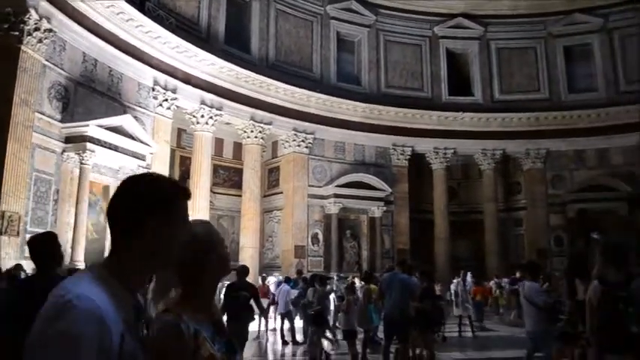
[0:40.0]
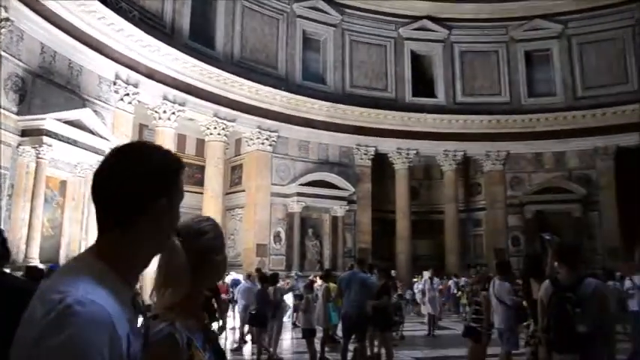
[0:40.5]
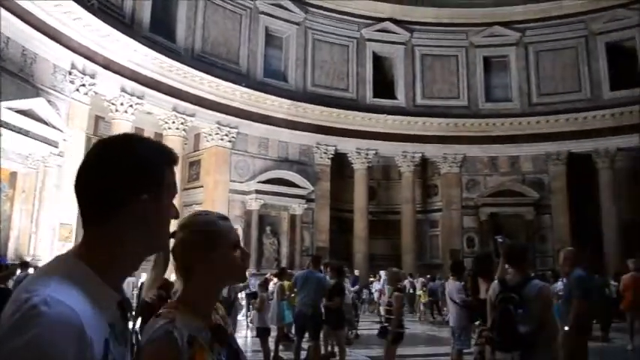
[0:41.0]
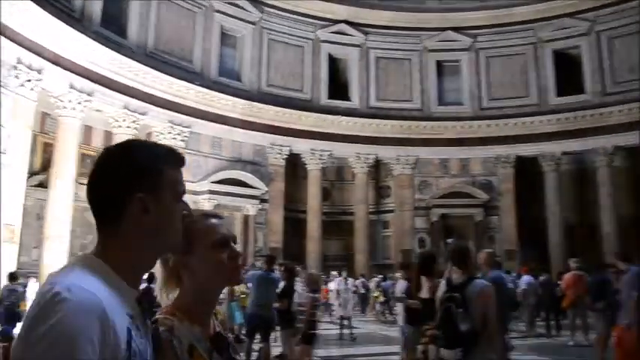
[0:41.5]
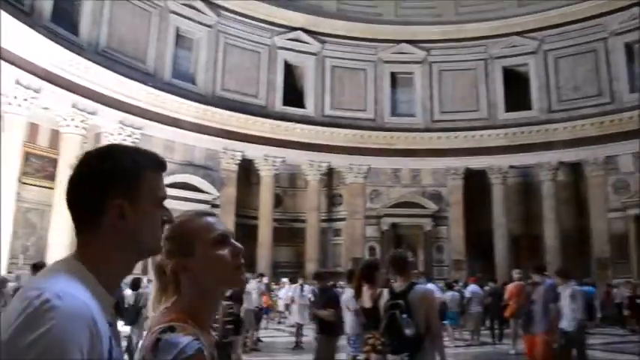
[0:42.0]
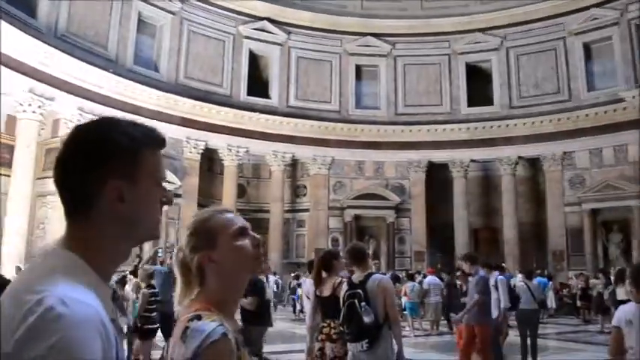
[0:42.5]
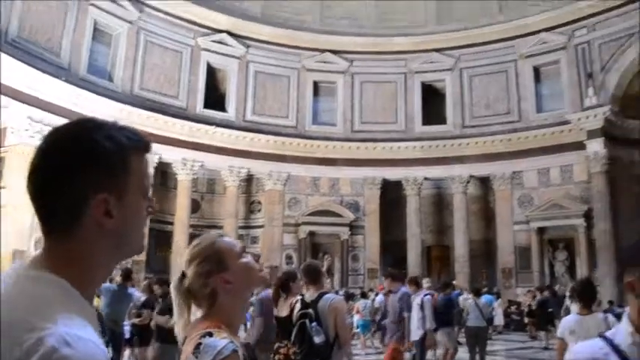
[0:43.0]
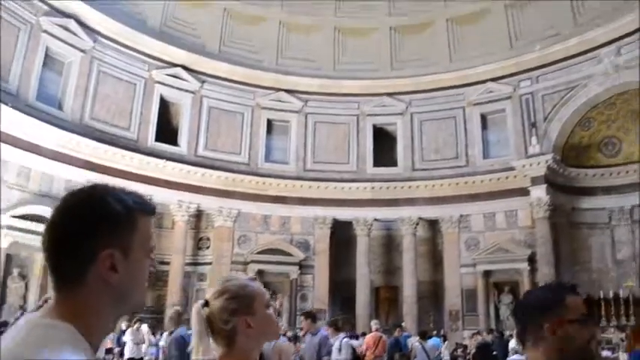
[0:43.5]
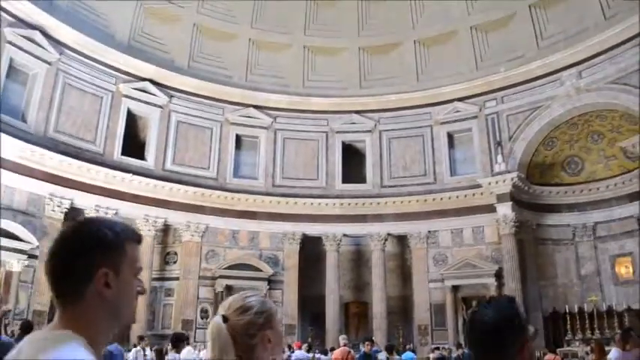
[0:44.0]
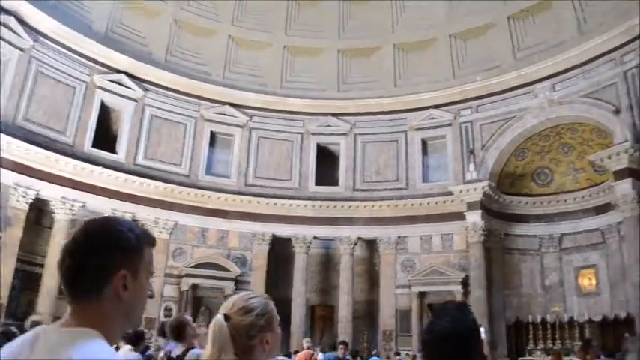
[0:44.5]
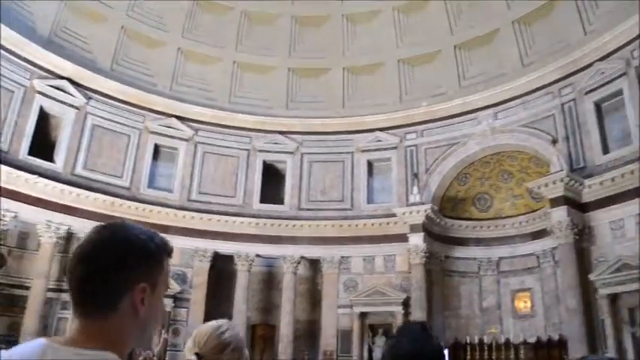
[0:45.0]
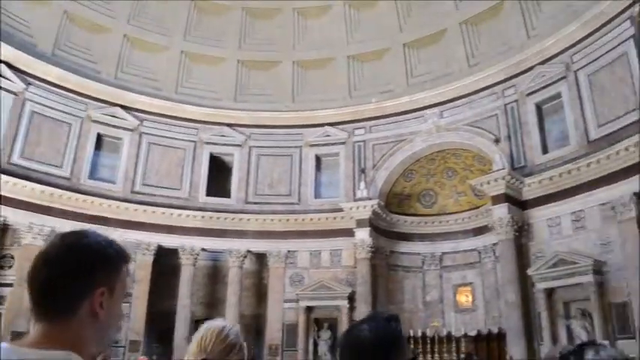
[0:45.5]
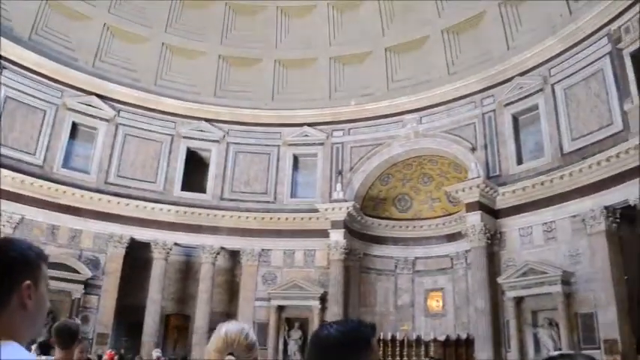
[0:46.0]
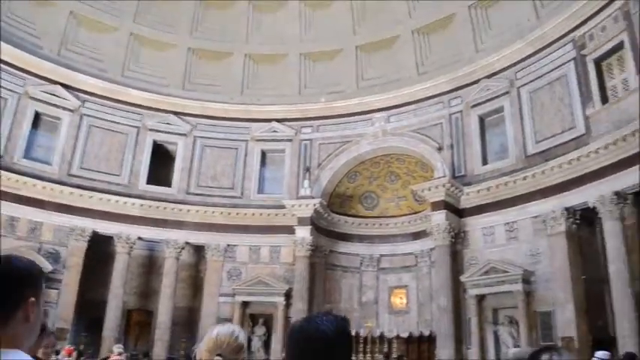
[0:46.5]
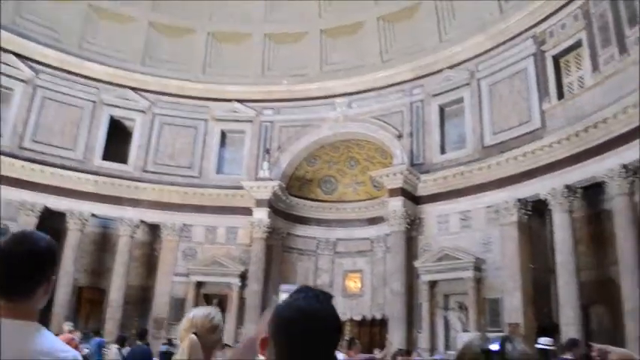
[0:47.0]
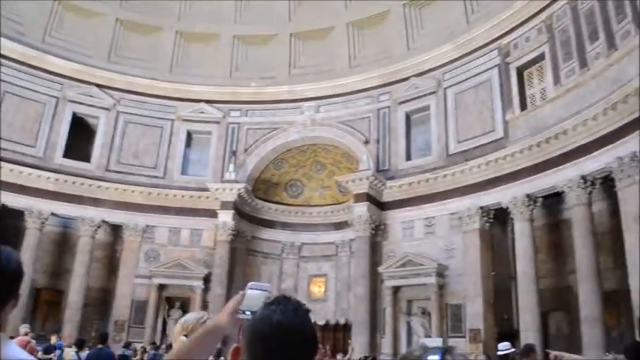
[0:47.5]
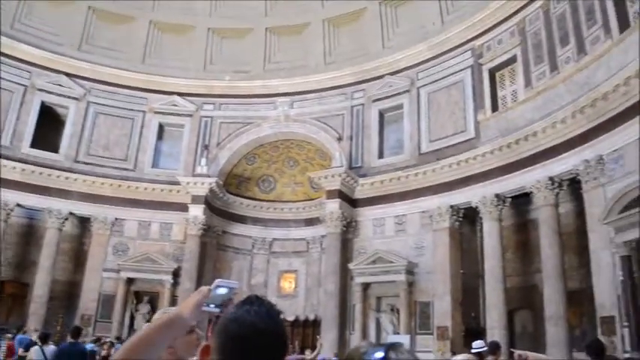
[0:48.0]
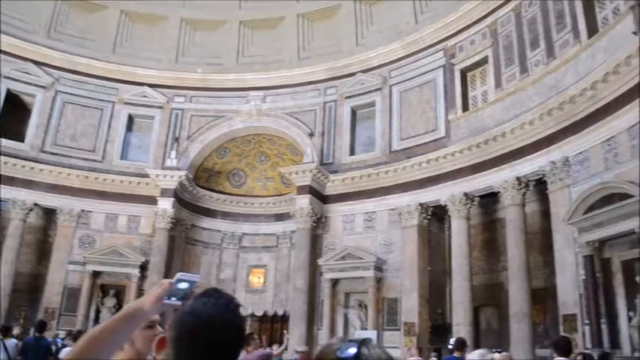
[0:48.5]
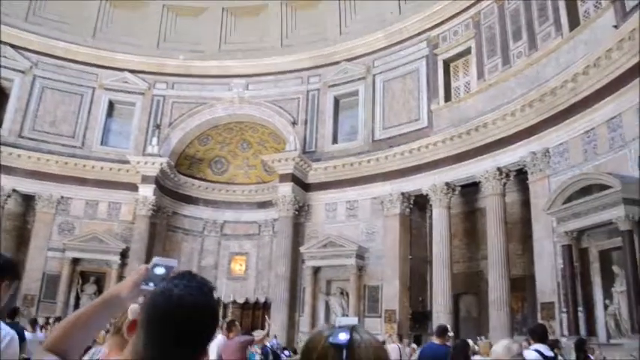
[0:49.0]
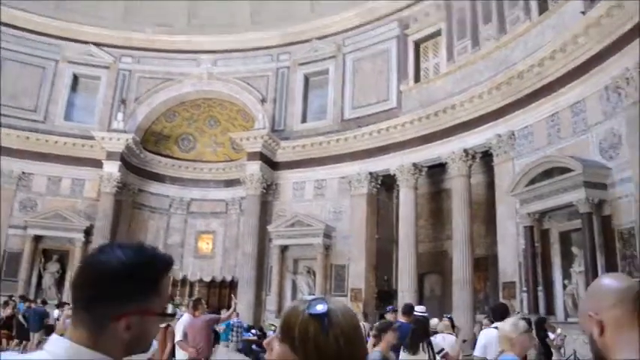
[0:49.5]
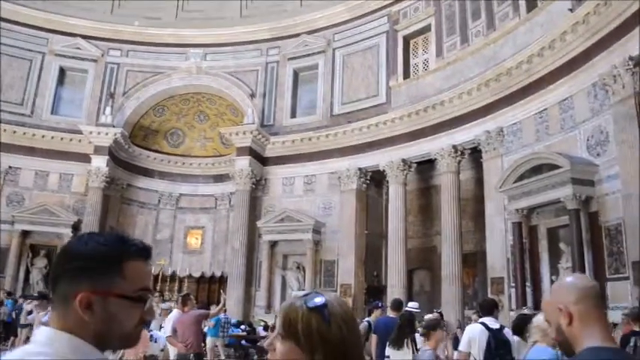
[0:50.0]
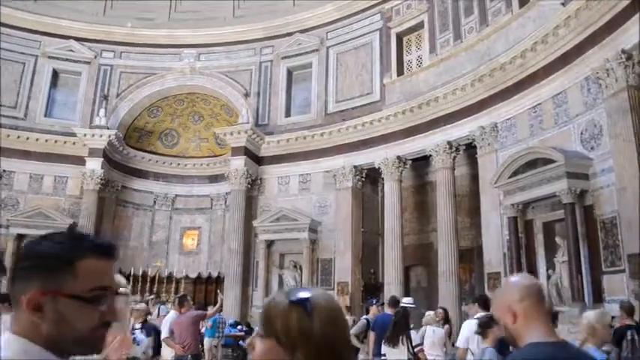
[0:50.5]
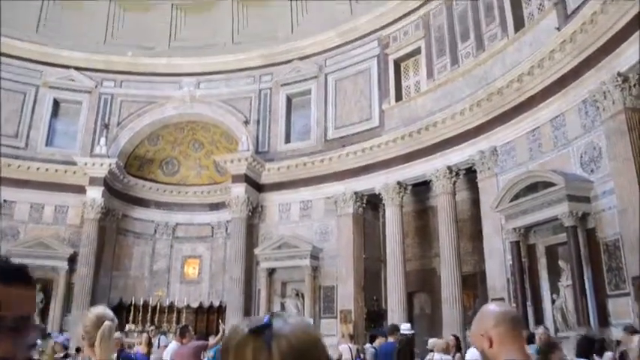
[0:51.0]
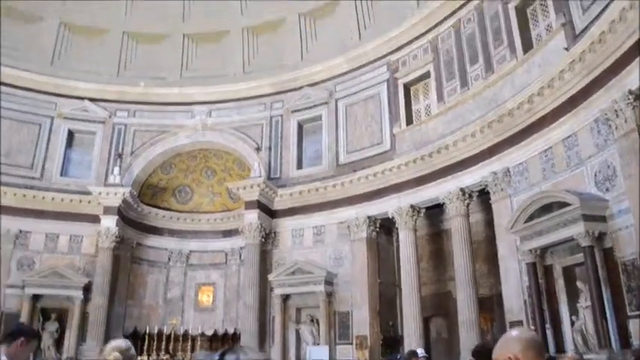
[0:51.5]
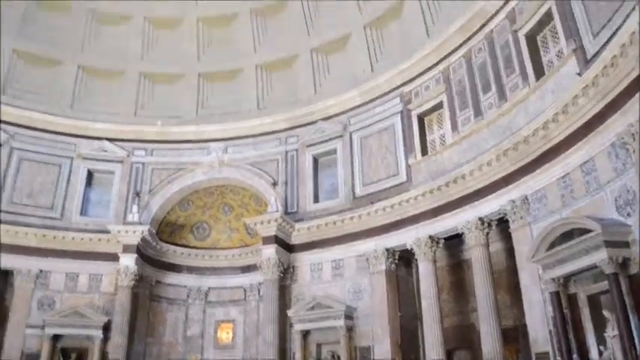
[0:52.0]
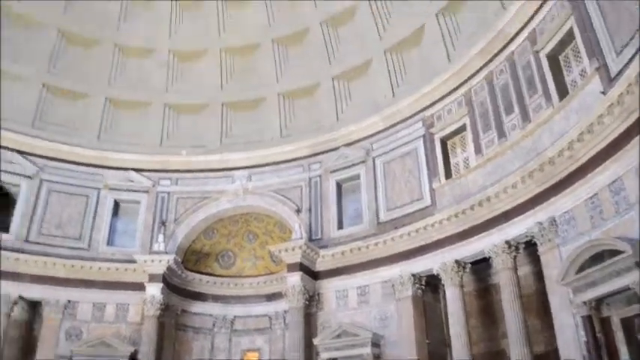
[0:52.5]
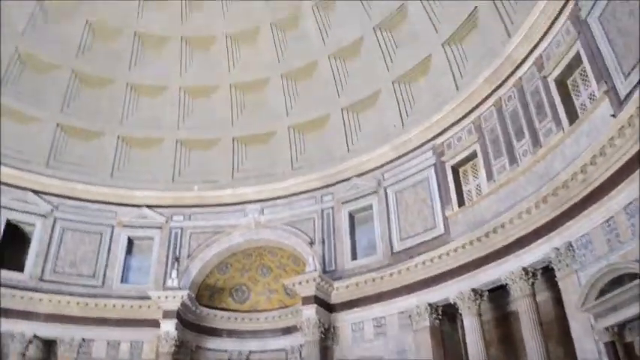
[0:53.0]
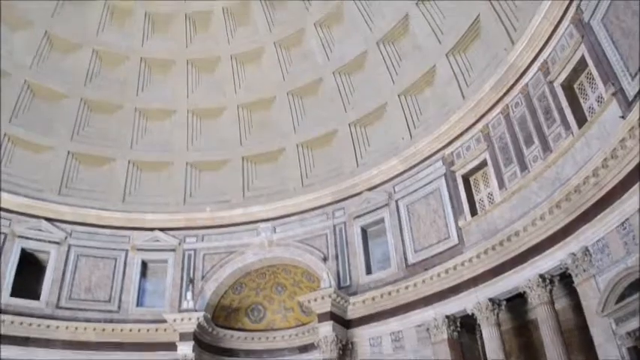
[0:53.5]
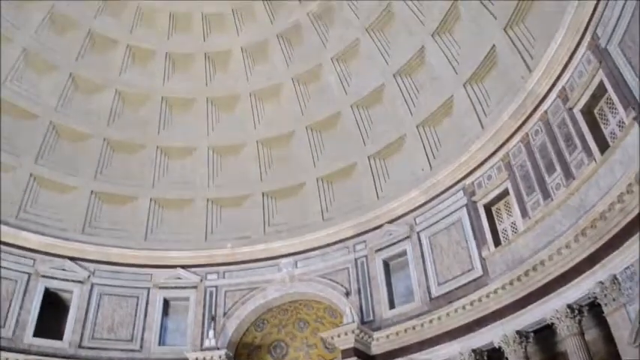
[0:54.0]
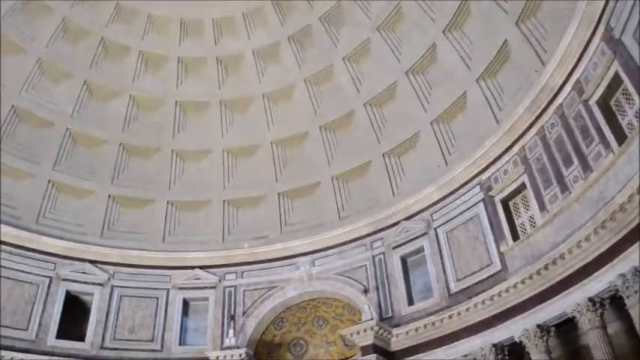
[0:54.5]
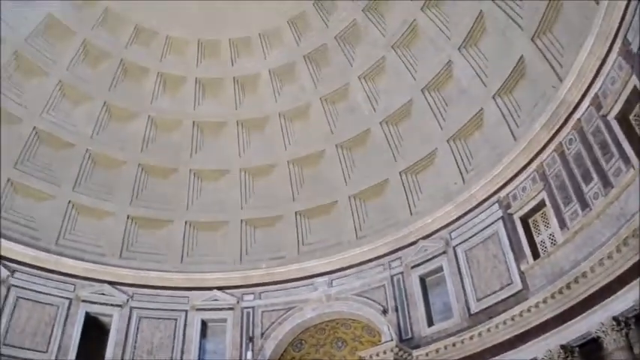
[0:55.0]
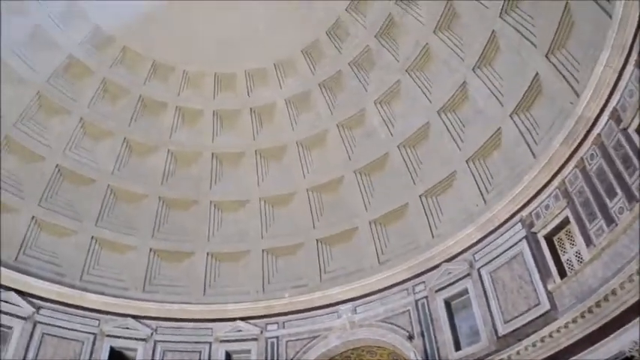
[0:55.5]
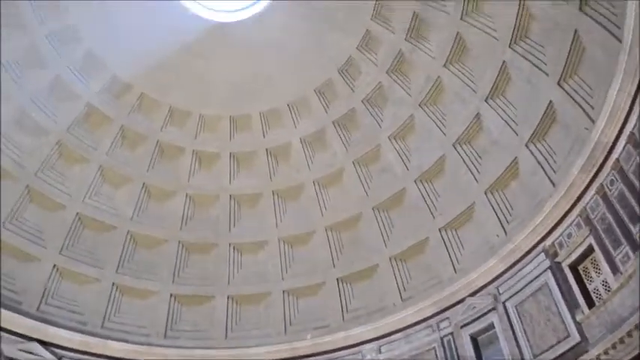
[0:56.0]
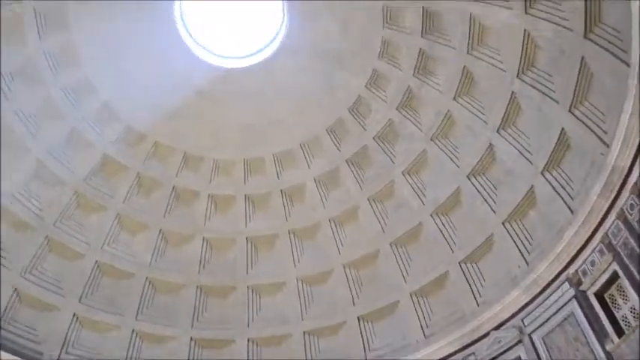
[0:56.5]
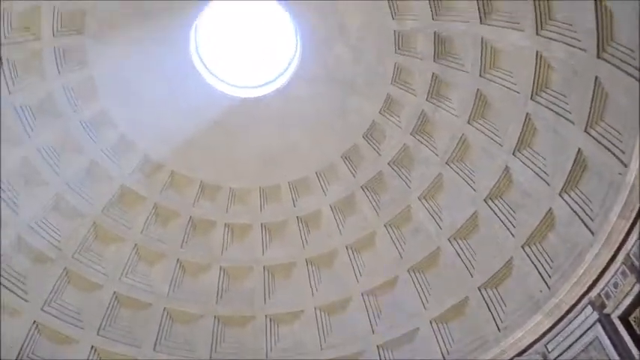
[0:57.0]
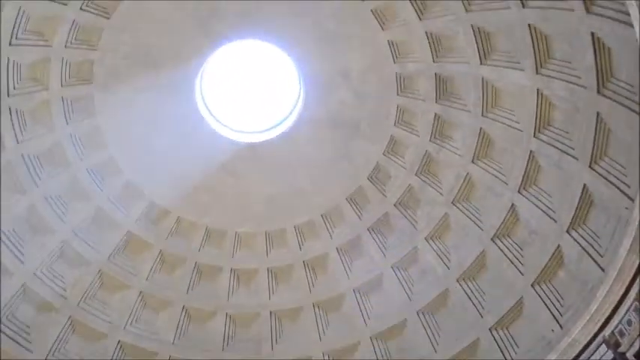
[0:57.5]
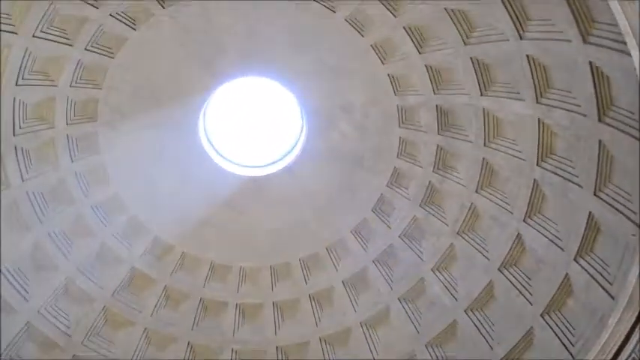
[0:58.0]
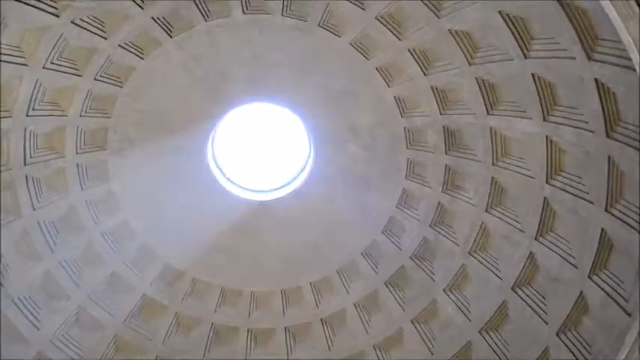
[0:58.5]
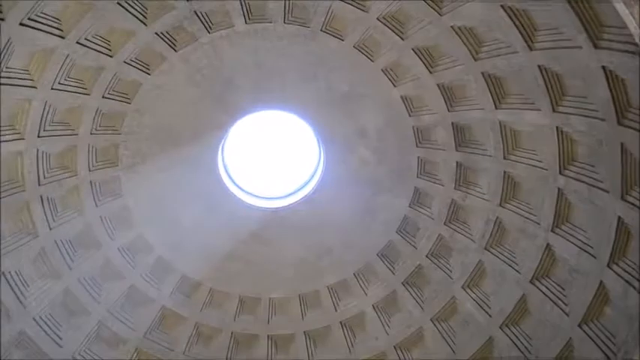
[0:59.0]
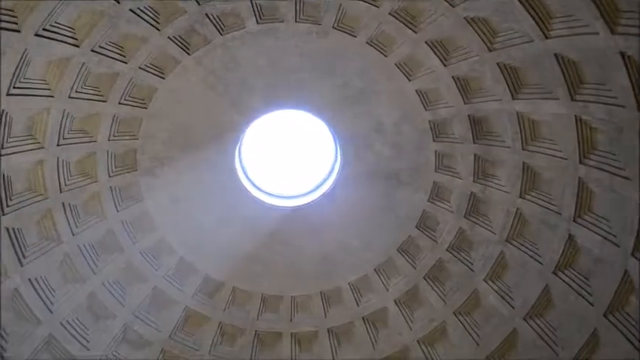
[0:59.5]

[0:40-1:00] A couple looks up at the inside of the building as the camera rotates to the right, capturing the overall atmosphere and the designs in the building. There are lots of square cutout designs, some of them overhead, along with pillars and, every once in a while, statues near the floor on the side of the wall, engraved into the building. The camera then moves upward to capture the ceiling, which is a dome sphere-shaped ceiling with square cutouts next to each other. The cutouts go in horizontal rows all the way to the very top of the ceiling, which is an open circle with light beaming through.